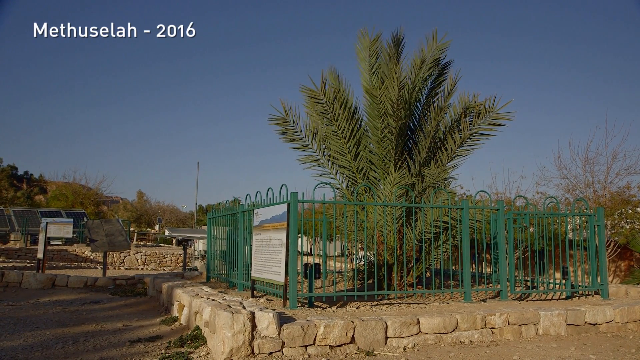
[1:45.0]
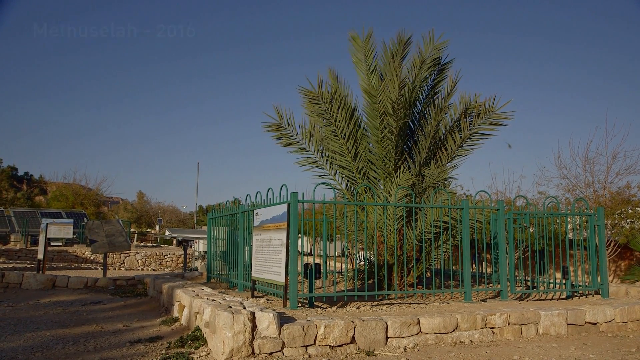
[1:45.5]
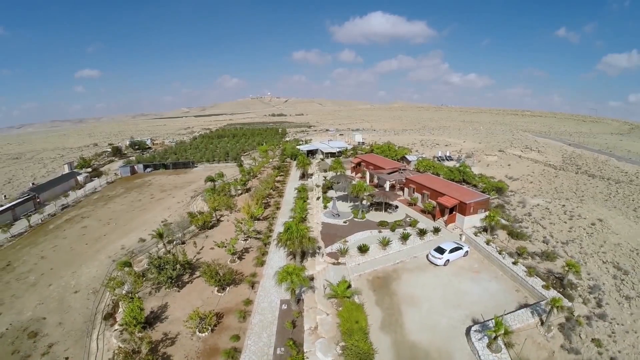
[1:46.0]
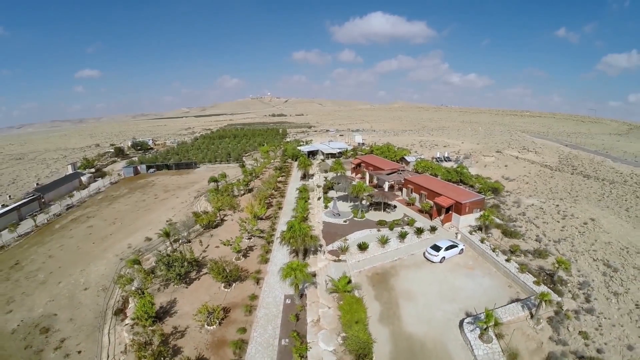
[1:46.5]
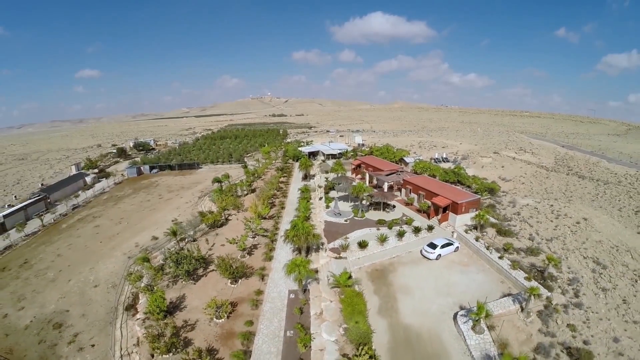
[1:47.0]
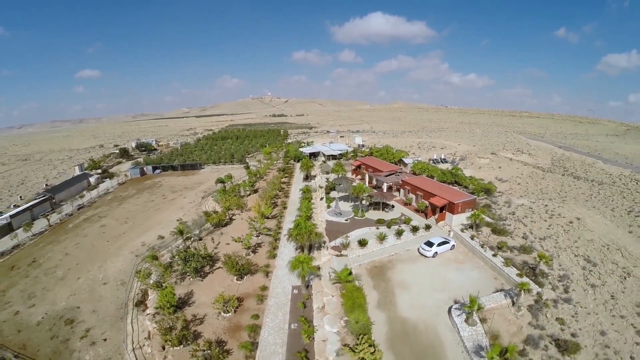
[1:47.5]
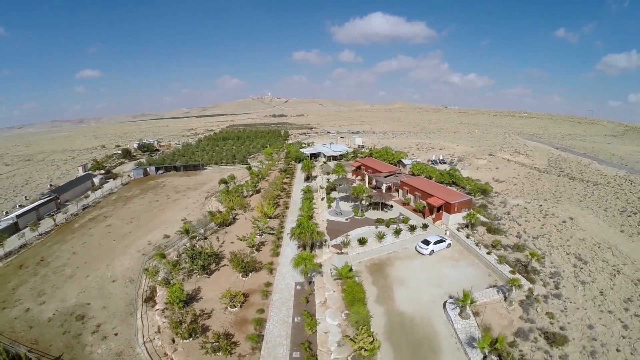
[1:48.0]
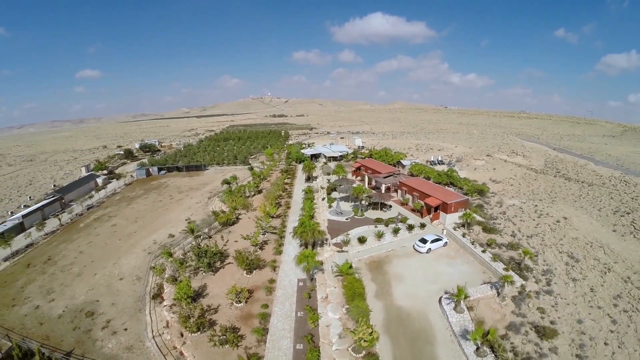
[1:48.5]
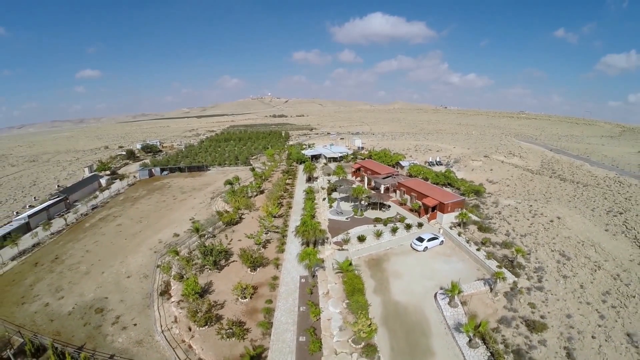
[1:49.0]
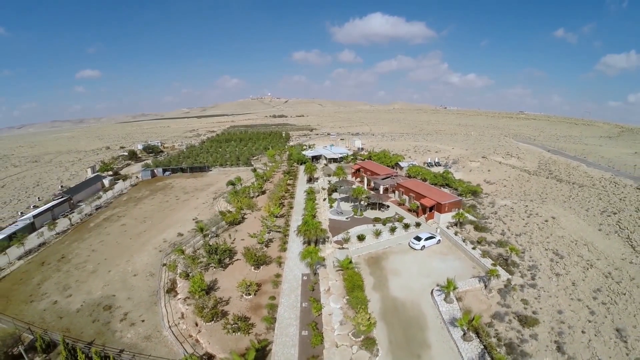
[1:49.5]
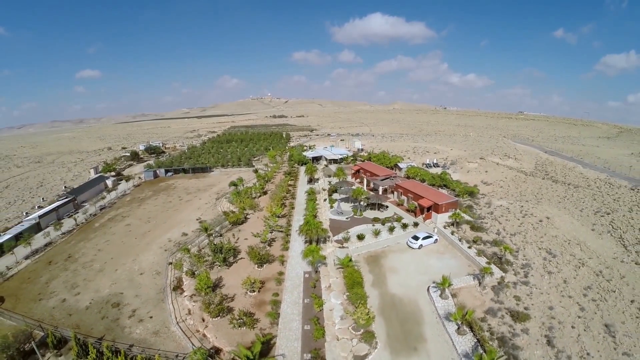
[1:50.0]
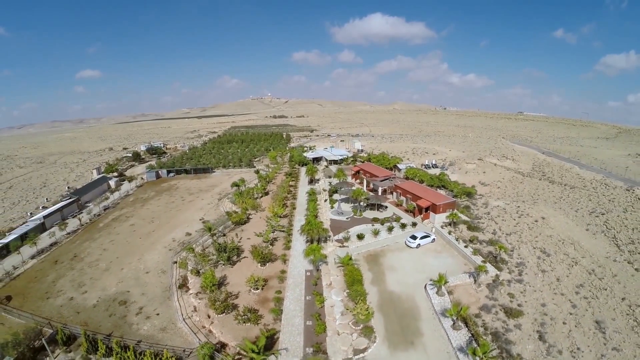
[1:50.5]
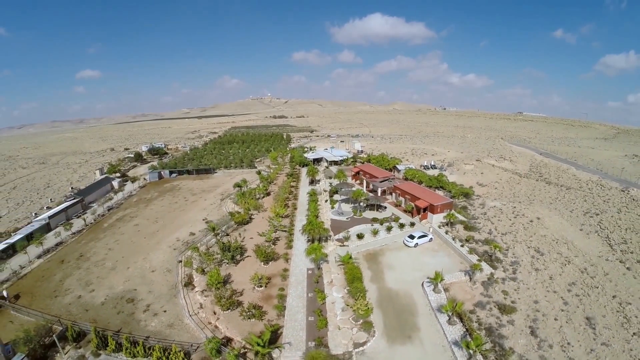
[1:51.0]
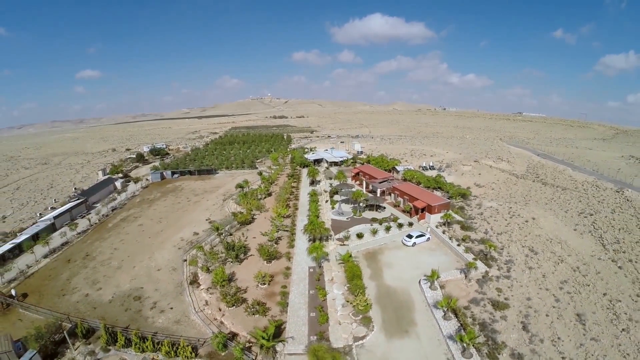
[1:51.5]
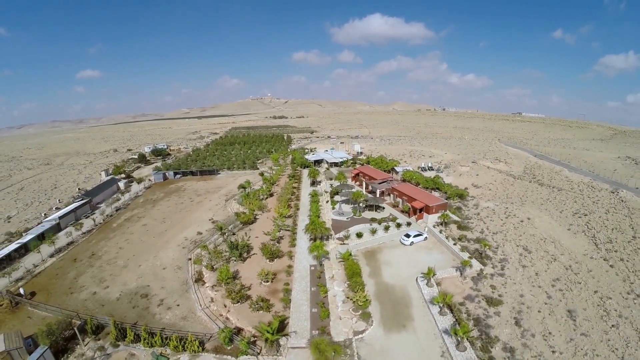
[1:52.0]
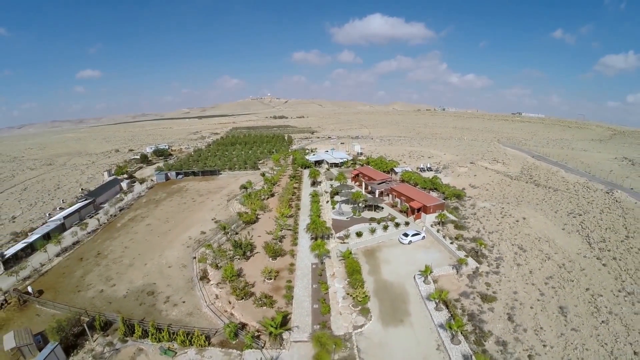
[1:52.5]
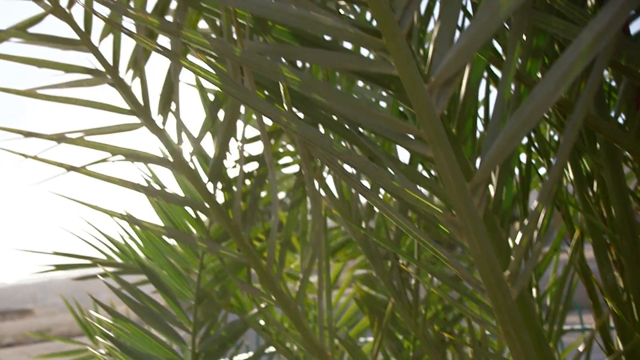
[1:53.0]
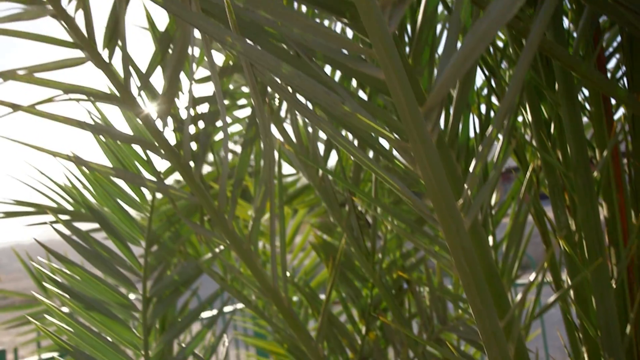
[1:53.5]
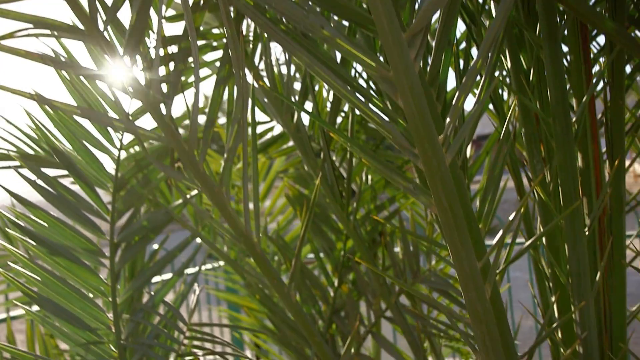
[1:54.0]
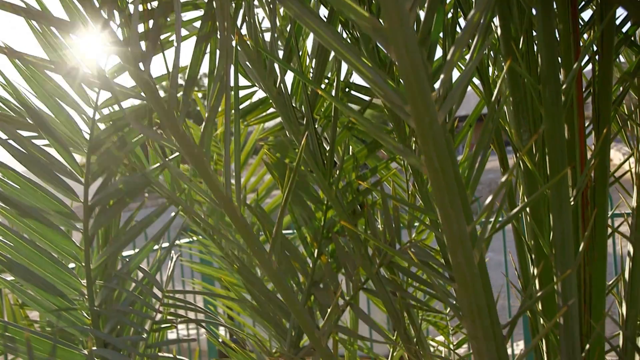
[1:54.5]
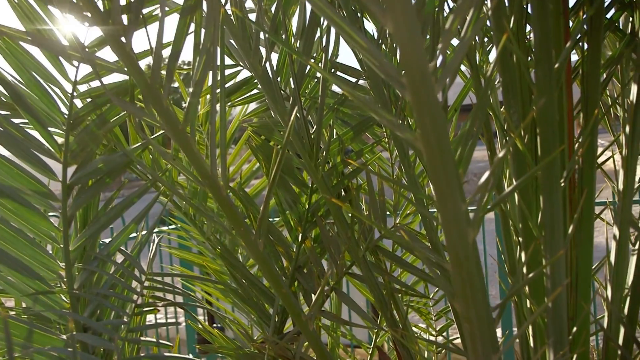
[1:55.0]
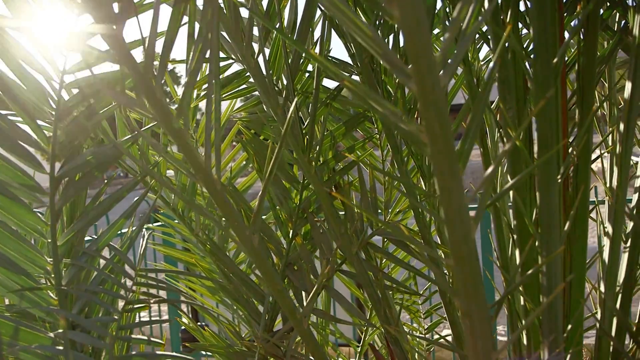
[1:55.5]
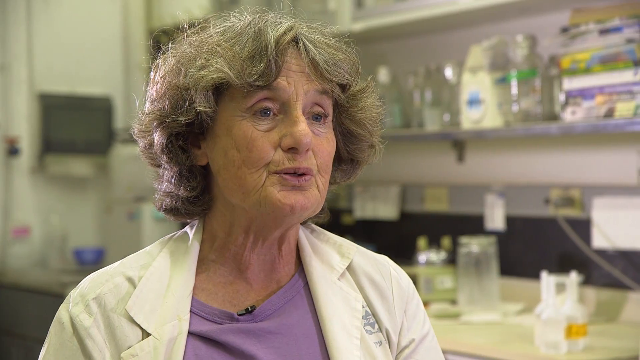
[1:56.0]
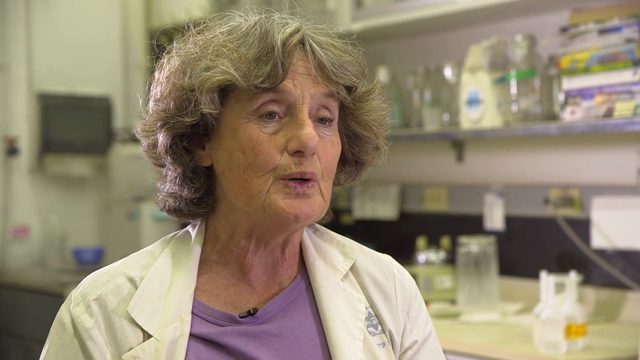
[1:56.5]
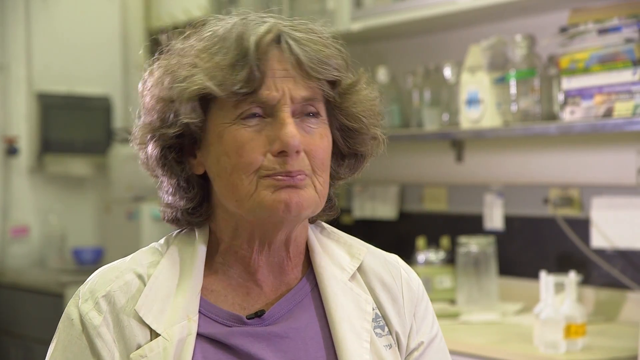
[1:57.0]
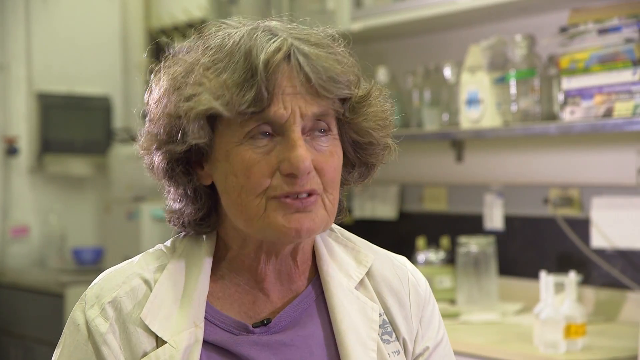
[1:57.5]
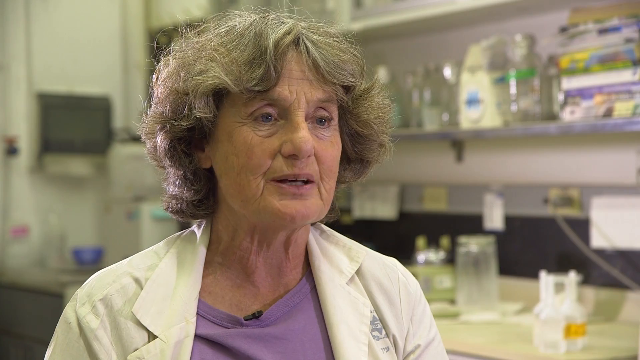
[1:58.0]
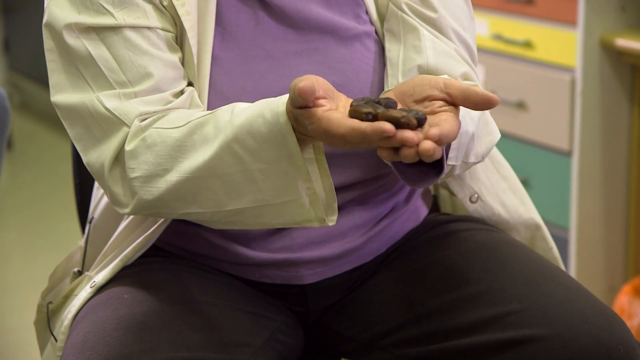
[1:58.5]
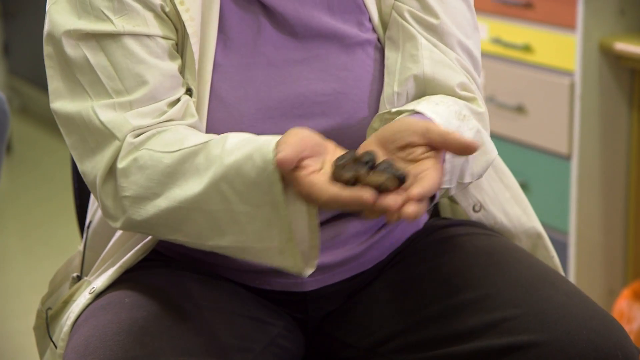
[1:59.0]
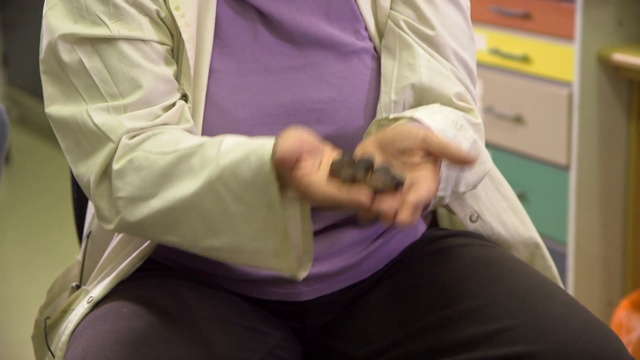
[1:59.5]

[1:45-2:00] An aerial view, apparently from a drone, shows a large plantation of Judean date palms with some red-roofed buildings on the right-hand side and a car parked on the right-hand side. A close-up shows the palms, which look somewhat like standard palm trees. A woman shows off the seeds in her hand, showing what they are shaped like. The plantation looks like it covers maybe six or so acres.